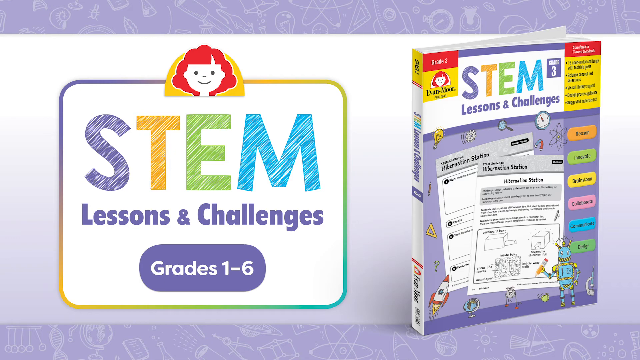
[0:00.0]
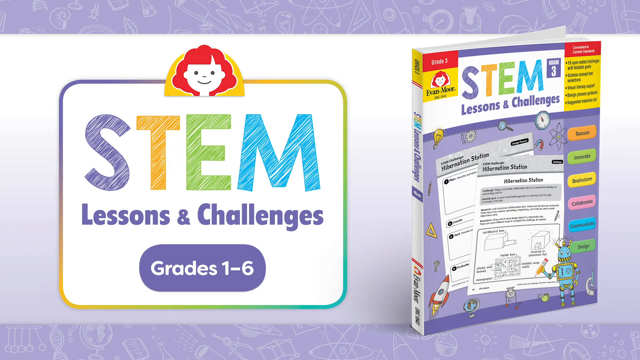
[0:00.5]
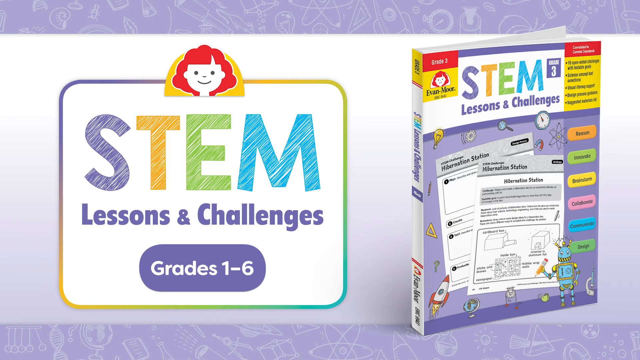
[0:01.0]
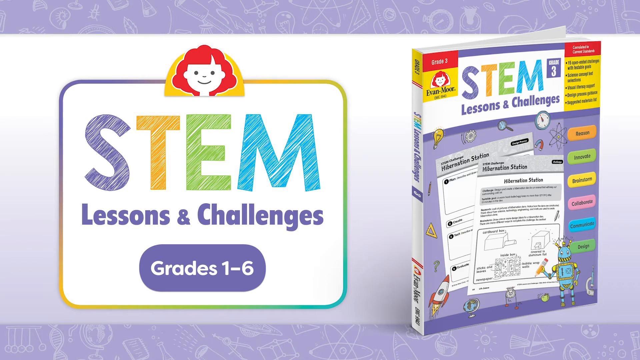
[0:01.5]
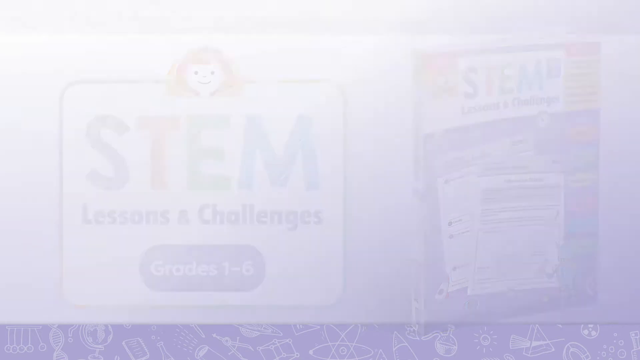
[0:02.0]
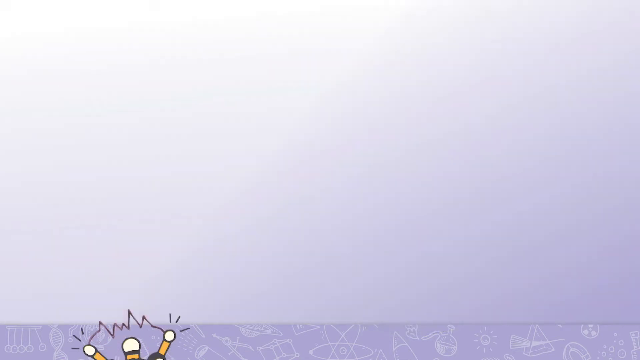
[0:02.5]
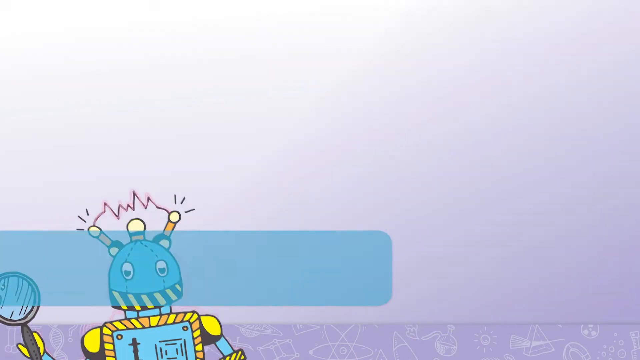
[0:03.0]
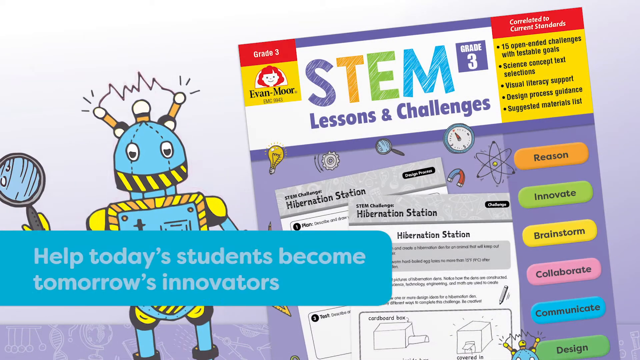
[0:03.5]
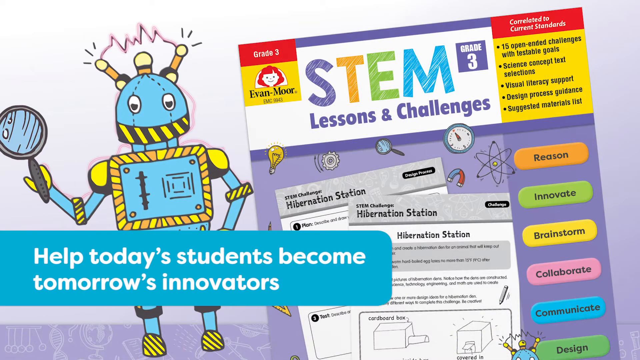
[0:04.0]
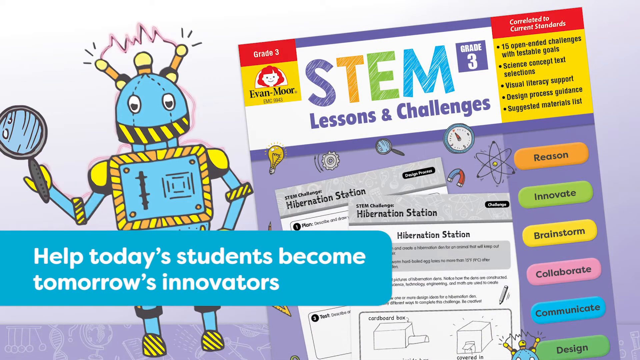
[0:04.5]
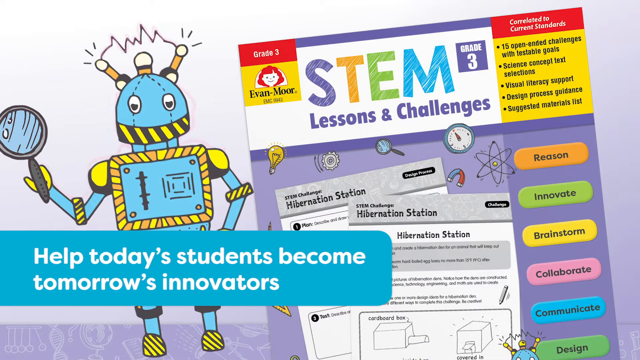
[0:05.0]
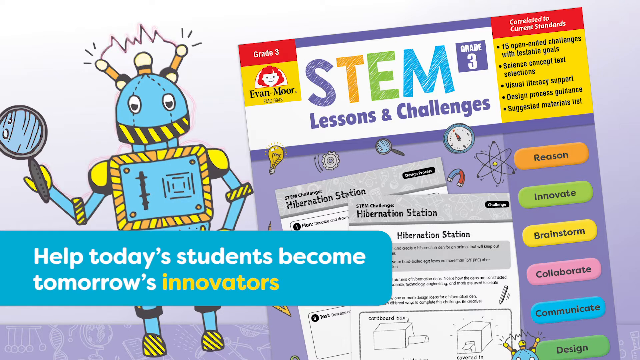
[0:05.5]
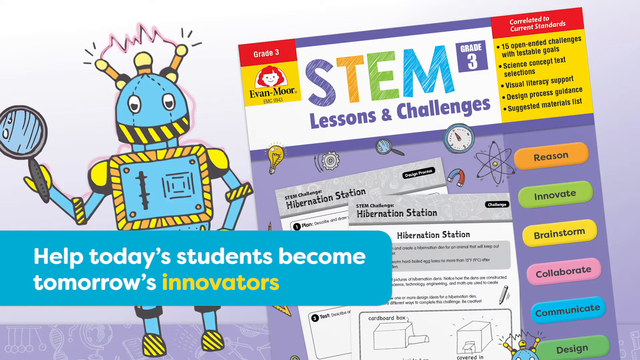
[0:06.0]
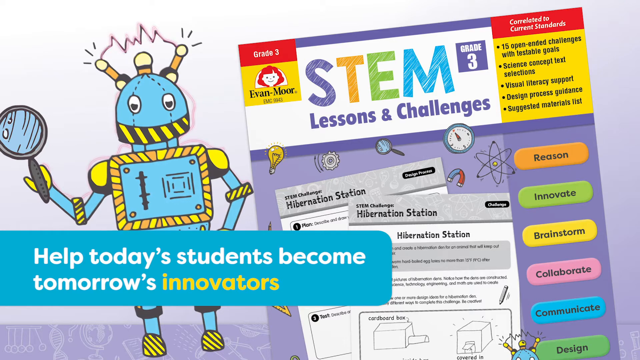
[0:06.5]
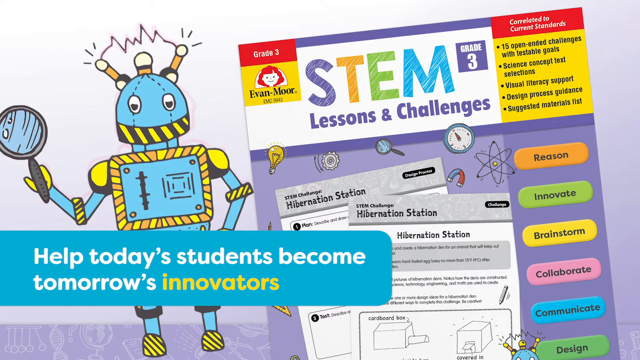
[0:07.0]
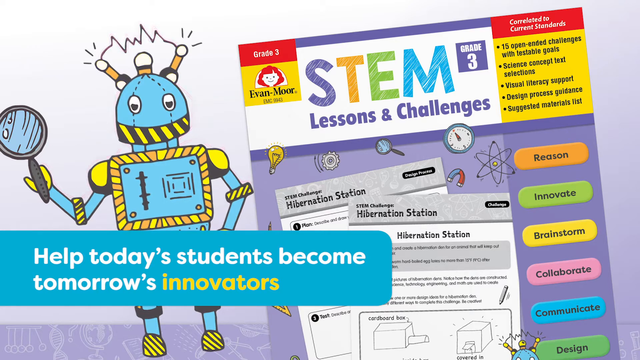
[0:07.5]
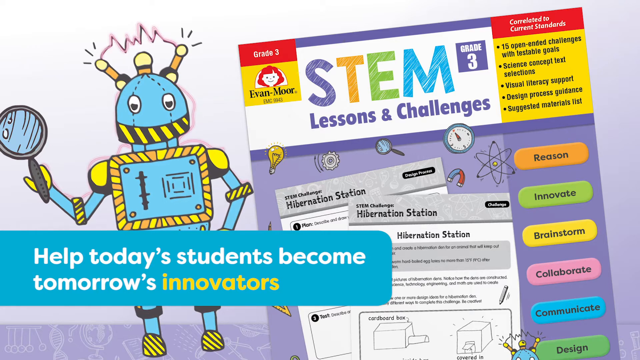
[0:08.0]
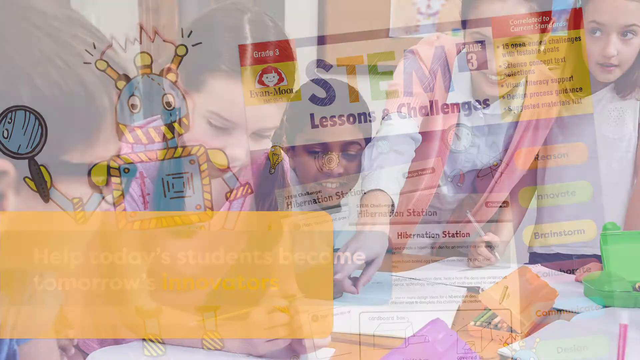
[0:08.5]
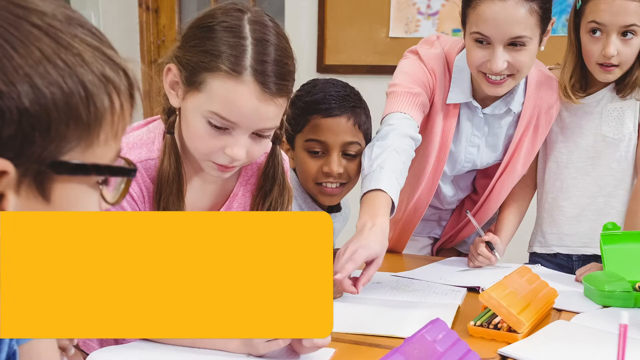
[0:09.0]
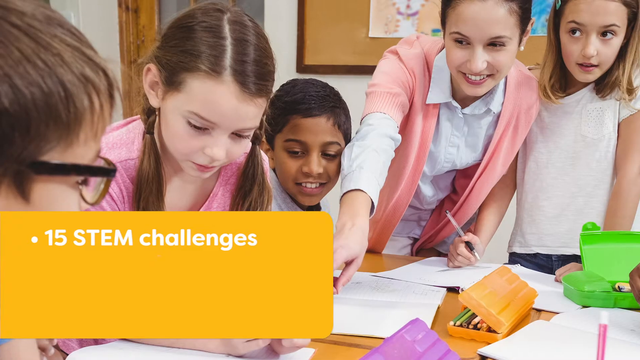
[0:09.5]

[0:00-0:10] On-screen text reads "STEM" and "grade one to six," with "STEM" written in different colors and the words about learning and challenges also in different colors; it appears to be a book for grades one to six. Text then reads "help today's students become tomorrow's innovators." A cartoon stands next to the book. A group of kids read the book together, talking while they read. Text reads "15 STEM challenges," apparently meaning the book contains 15 STEM challenges to complete. The kids are a mix of boys and girls, black and white, and all of them are focused on the book, looking into it. One boy among them wears glasses.